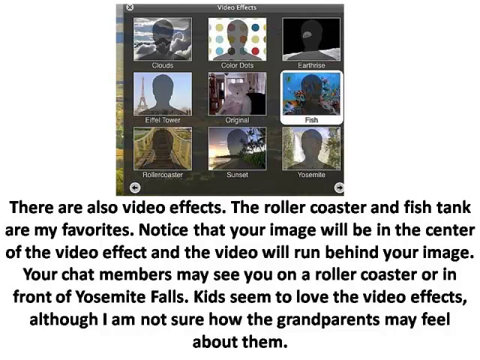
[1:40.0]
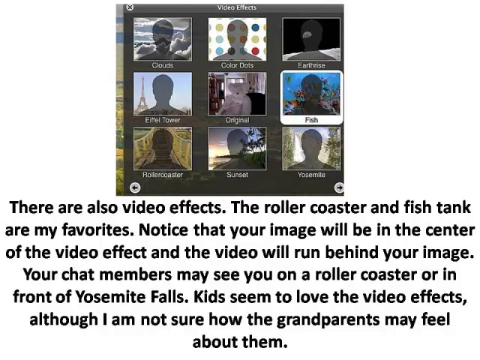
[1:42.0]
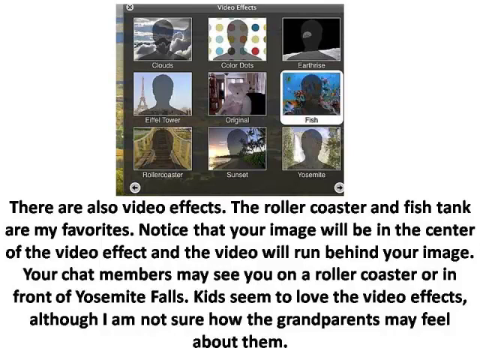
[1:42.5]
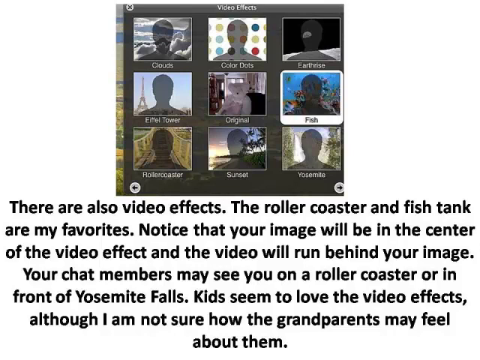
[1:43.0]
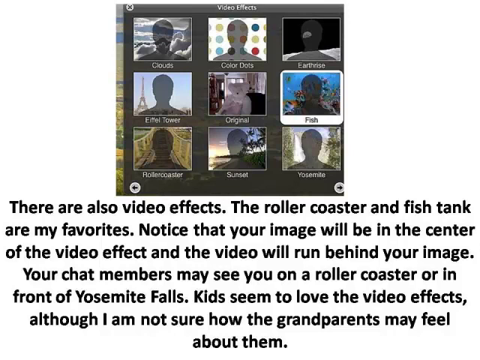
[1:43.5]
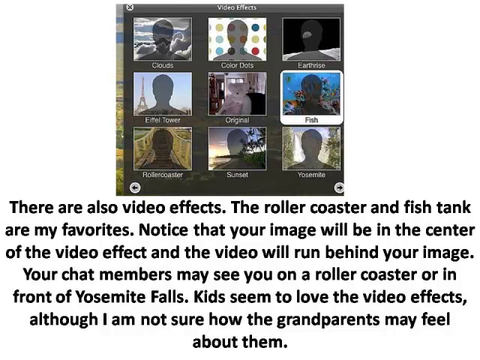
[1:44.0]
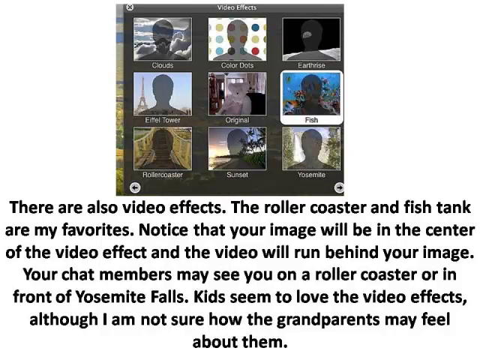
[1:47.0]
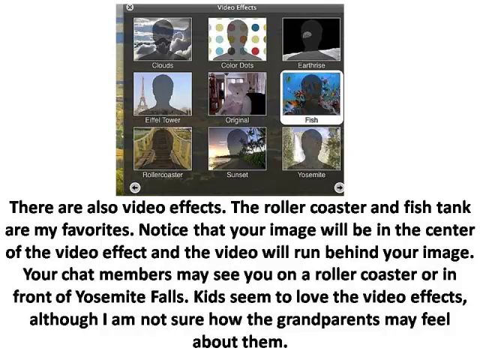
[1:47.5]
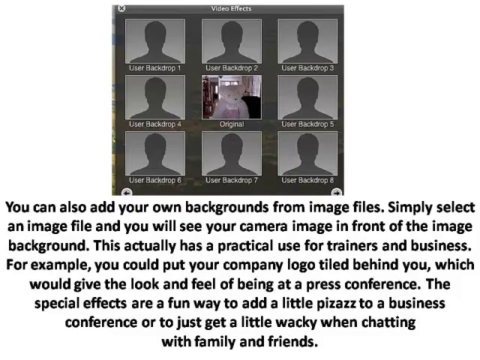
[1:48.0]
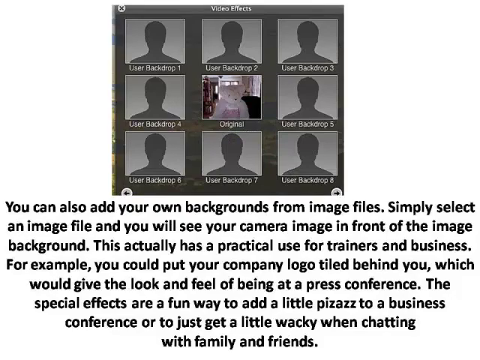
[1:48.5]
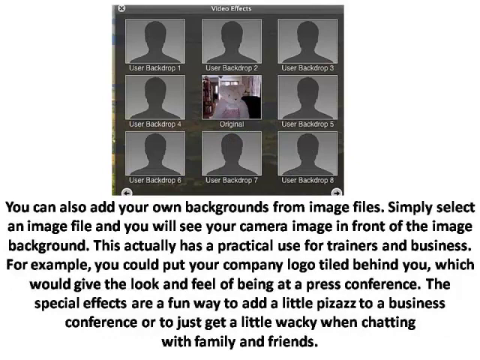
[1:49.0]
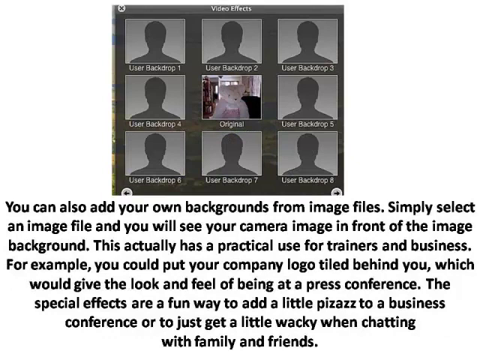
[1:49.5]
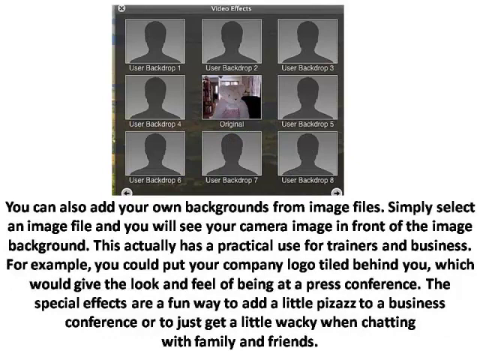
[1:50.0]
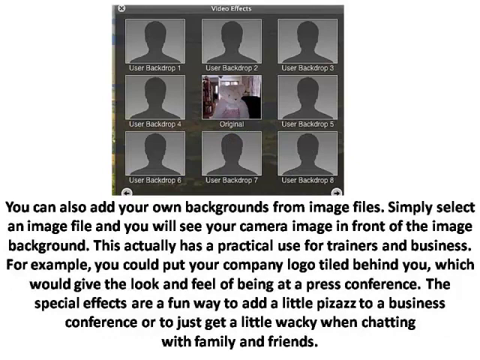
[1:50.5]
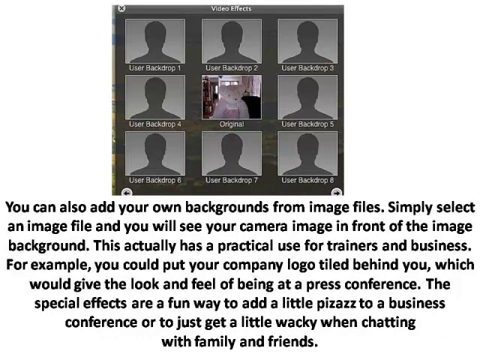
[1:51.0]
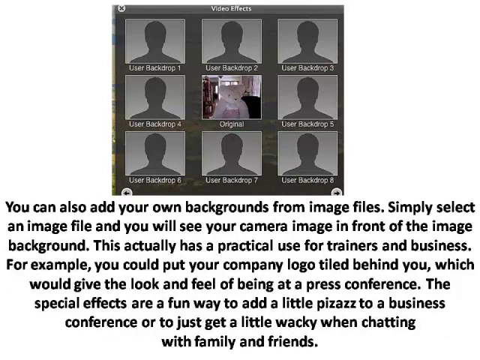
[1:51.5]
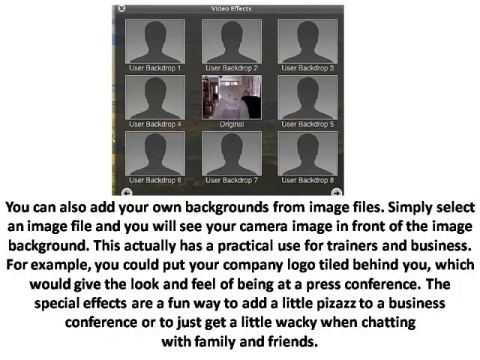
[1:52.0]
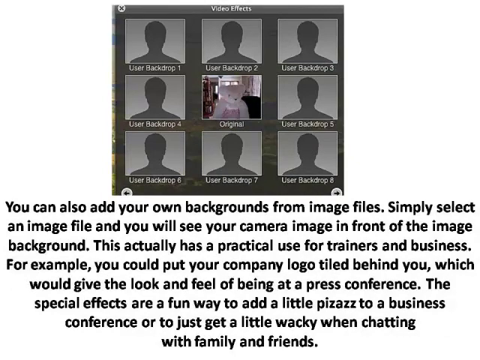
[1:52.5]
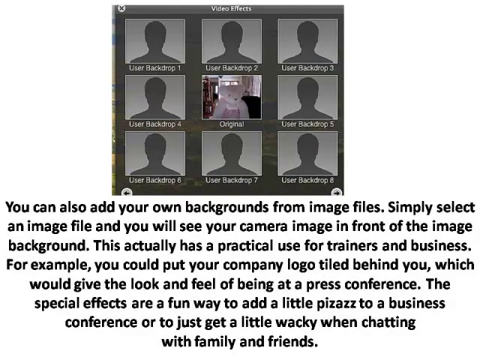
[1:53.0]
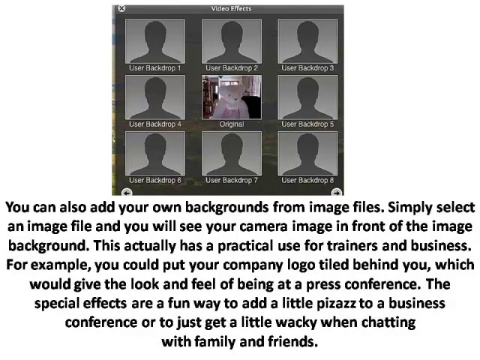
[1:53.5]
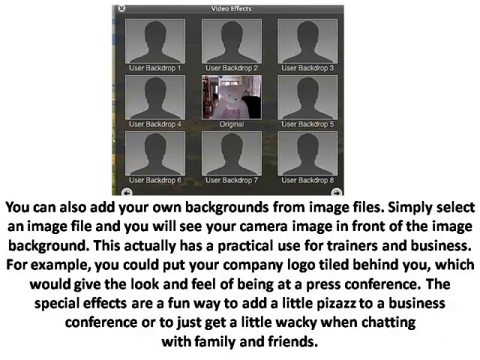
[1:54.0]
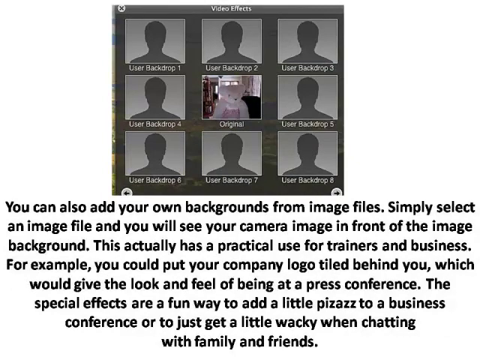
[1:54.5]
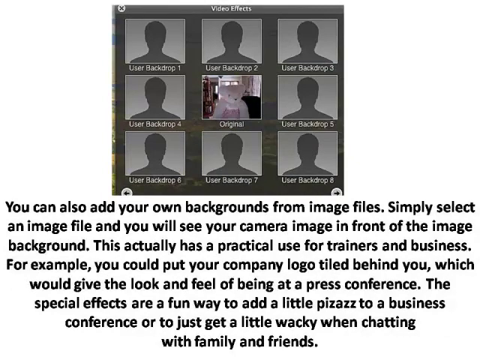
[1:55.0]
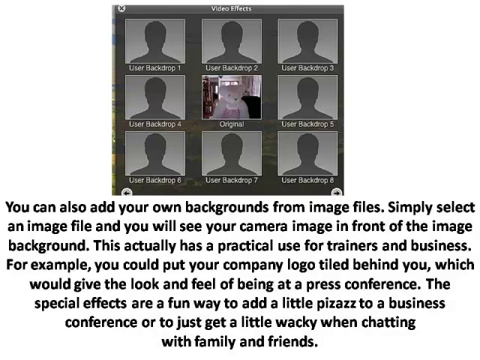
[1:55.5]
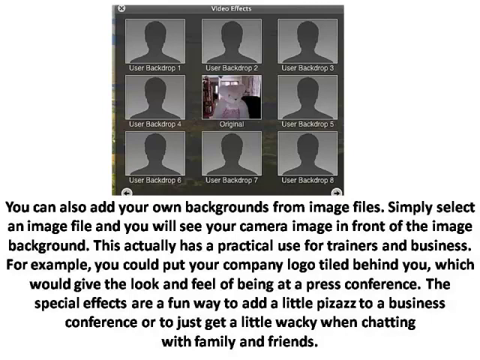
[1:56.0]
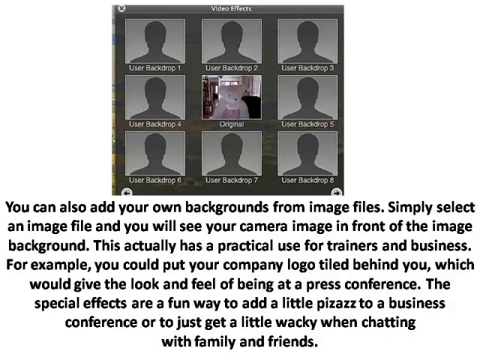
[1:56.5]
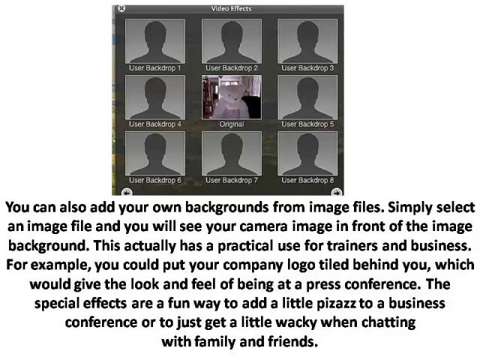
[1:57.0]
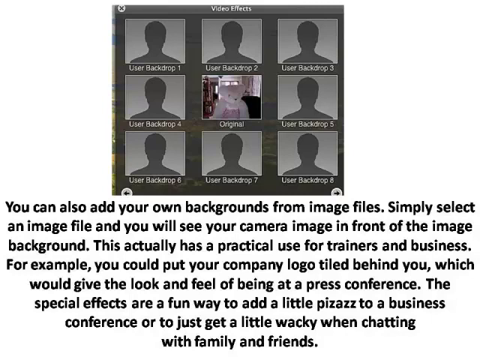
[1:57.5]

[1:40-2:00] The instructions about the video effects are still shown, with several video effects around the original image in the center. The text reads: "there are also video effects. The roller coaster and fish tank are my favorites." It continues that your image will be in the center of the video effect with the video running behind it, that chat members may see you on a roller coaster or in front of Yosemite Falls, and "Kids seem to love the video effects, although I am not sure how the grandparents may feel about them." The video moves to a different image whose text reads: "you can also add your own backgrounds to it from the image file. Simply select an image file and you will see your camera image in front of the image" and goes on about a practical use for trainers and business, putting a company logo tiled behind you for the look and feel of a press conference, and special effects adding a little pizzazz to a business conference or getting a little wacky when chatting with family and friends. At the top of the screen are user backdrops one through eight, which are blank, with the original image in the middle of all the options.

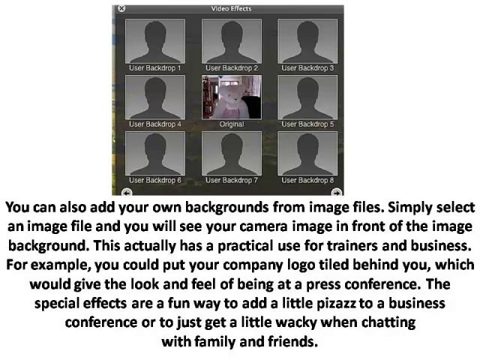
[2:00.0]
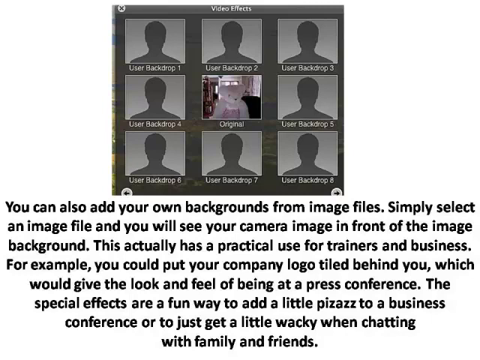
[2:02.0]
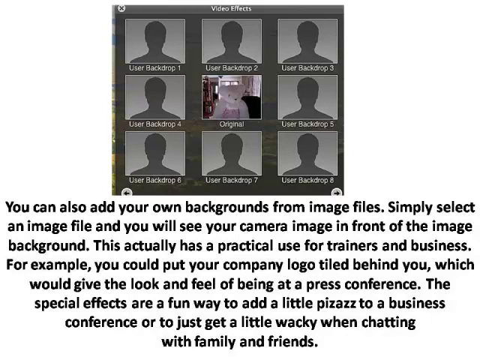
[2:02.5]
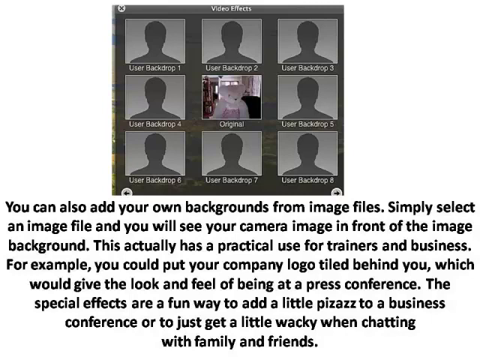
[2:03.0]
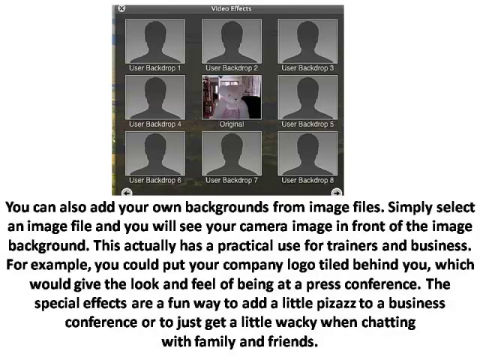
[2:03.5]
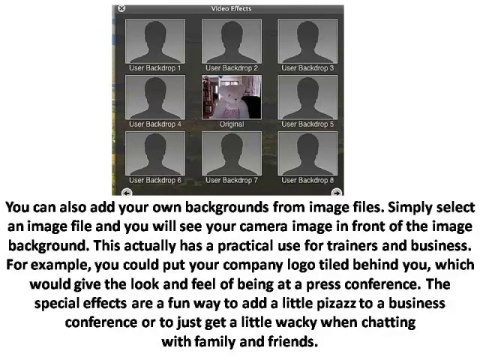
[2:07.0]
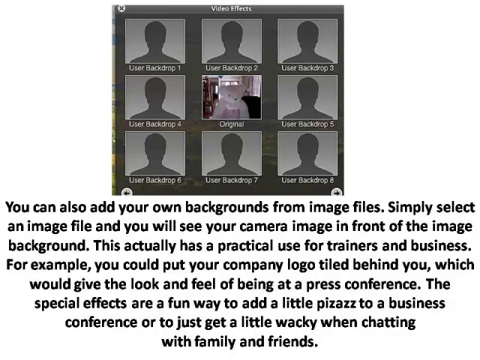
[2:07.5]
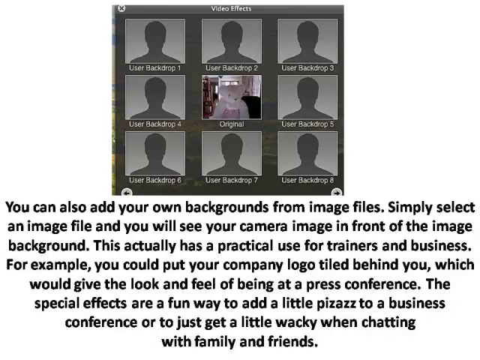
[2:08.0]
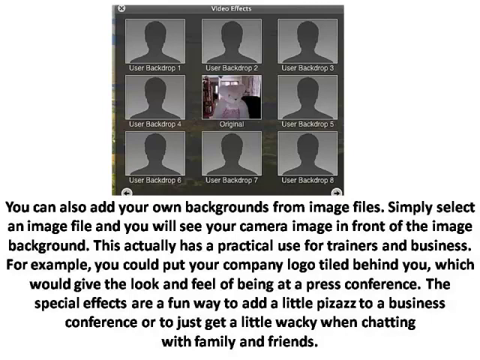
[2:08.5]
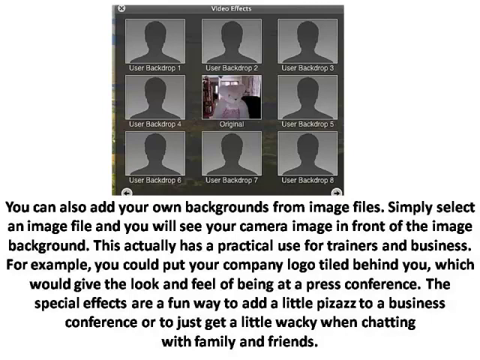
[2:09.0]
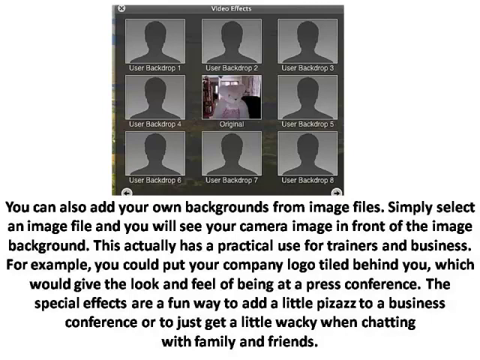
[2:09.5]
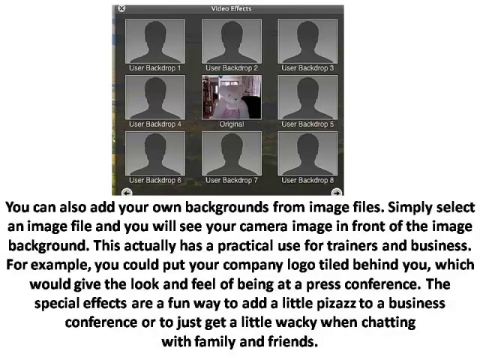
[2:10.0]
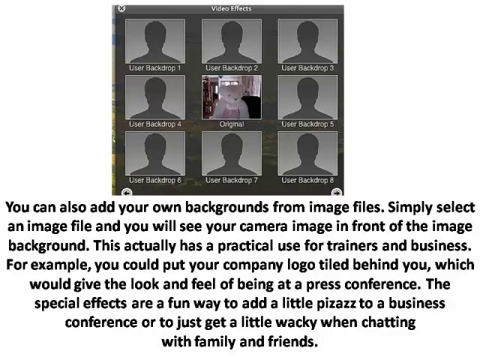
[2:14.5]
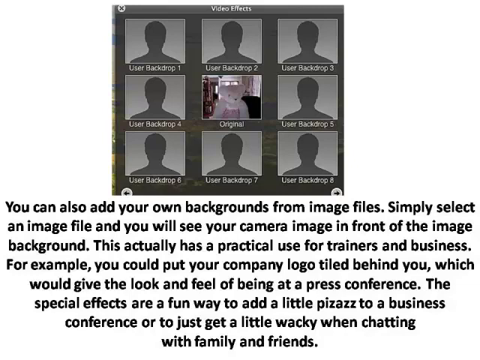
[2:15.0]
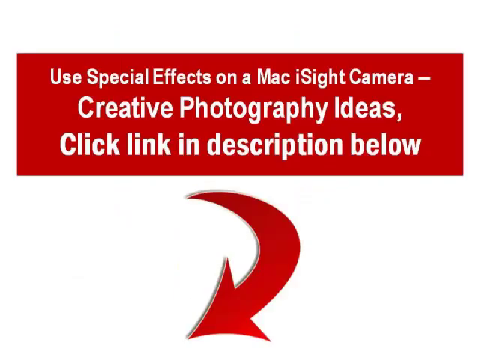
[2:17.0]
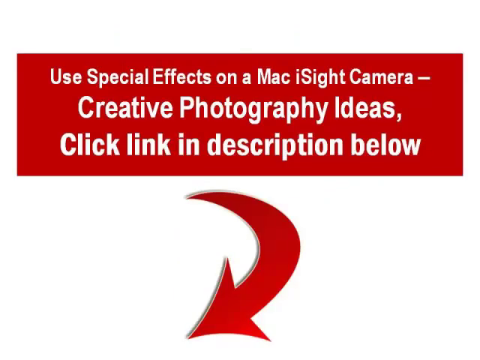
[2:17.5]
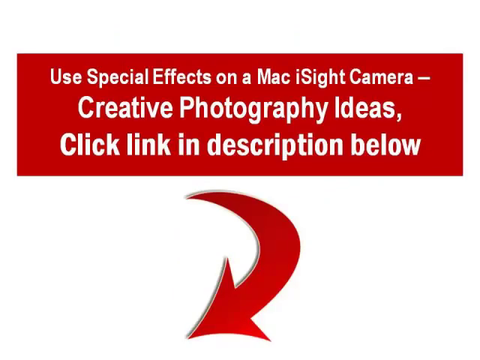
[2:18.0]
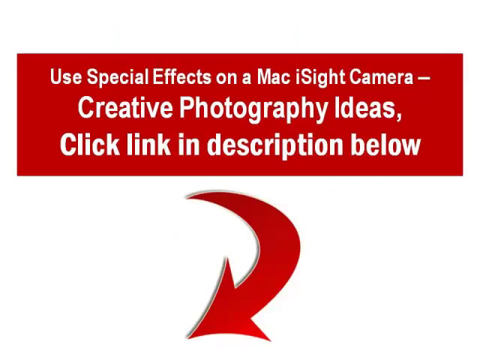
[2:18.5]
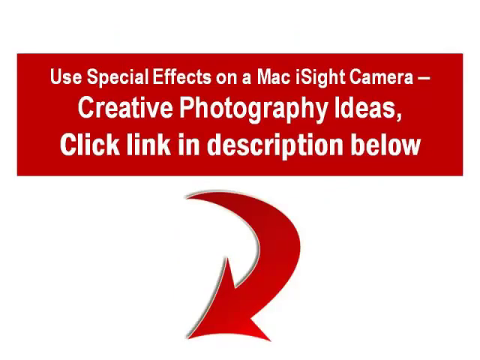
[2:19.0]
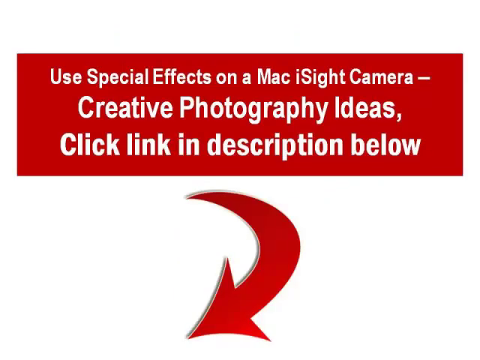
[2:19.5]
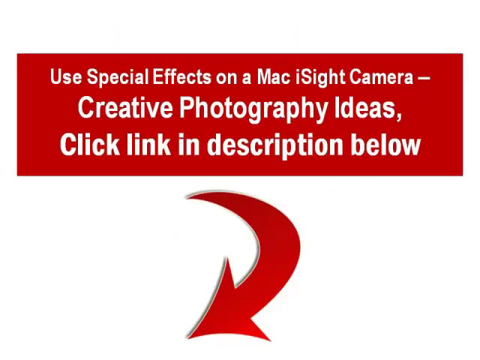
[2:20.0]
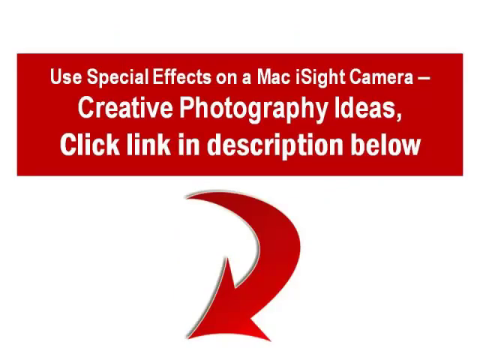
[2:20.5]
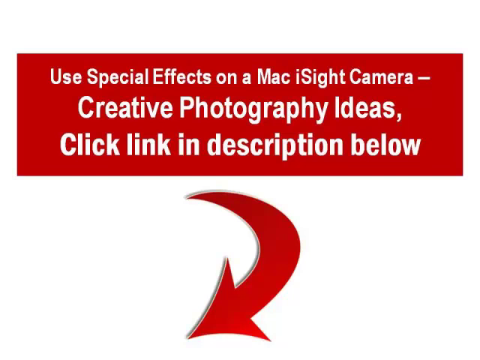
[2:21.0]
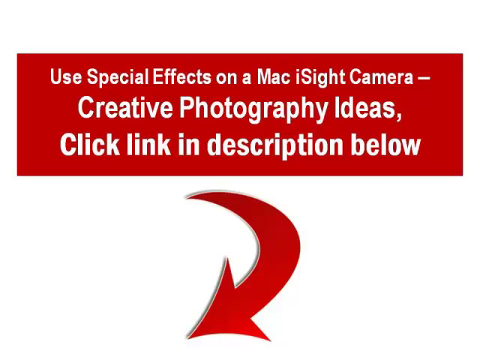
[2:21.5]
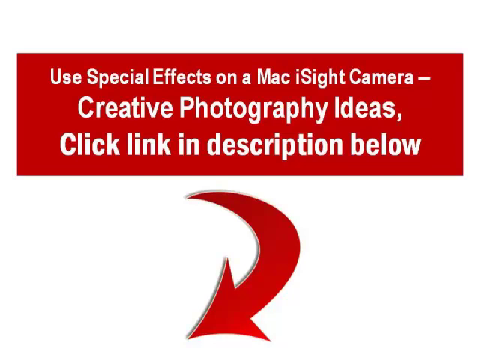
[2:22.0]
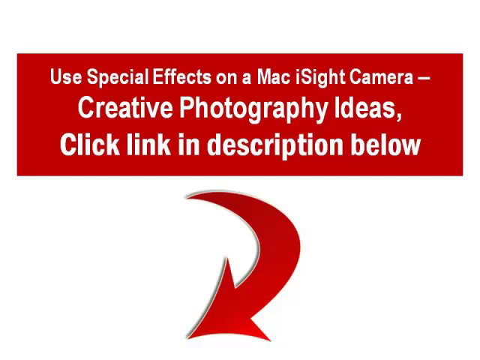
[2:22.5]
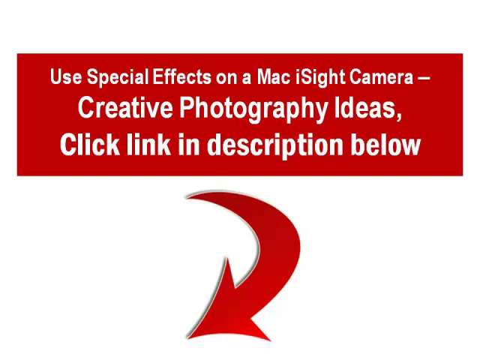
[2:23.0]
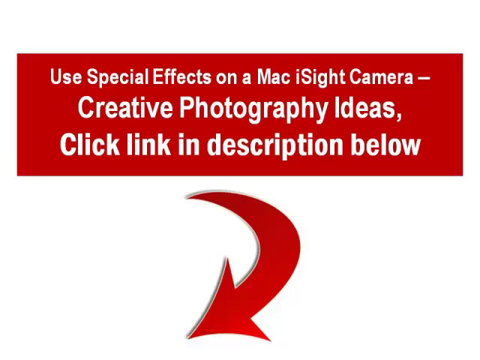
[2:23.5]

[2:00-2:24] The section about adding your own backgrounds continues. The text reads: "you can also add your own backgrounds from image files. Simply select an image file, and you will see your camera image in front of the image background. This actually is practical to use for trainers and business. For example, you could put your company logo tiled behind you, which will give the look and feel of being at a press conference. The special effects are a fun way to add a little pizzazz to a business conference or just to get a little wacky when chatting with family and friends." At the top of the screen are nine tiles: the image in the middle is the original, surrounded by eight user background options. Then what appears to be the end of the video shows white text on a red background reading "site camera, creative photography ideas. Click in description below," with a big red arrow pointing, apparently to advertise another video on the subject.